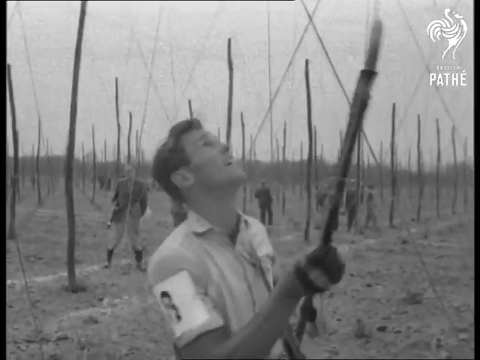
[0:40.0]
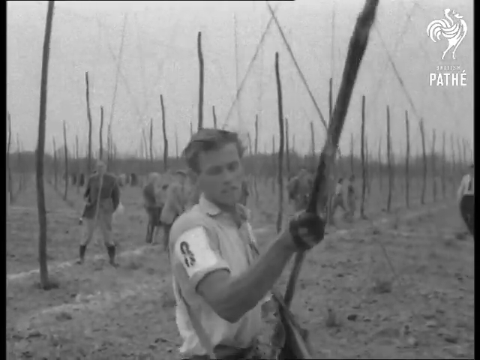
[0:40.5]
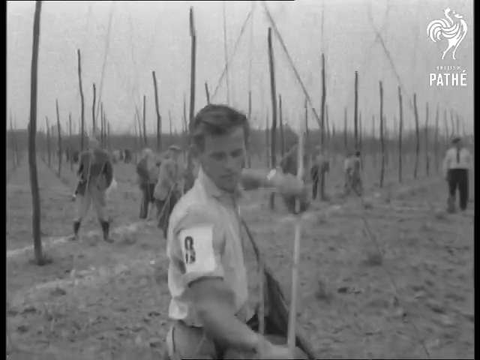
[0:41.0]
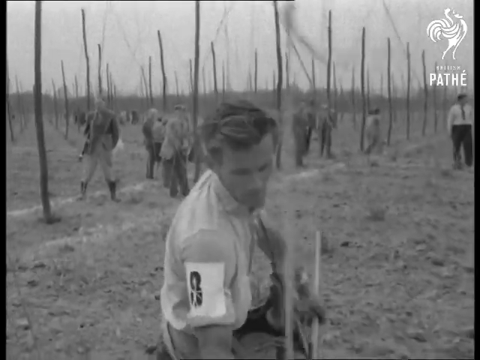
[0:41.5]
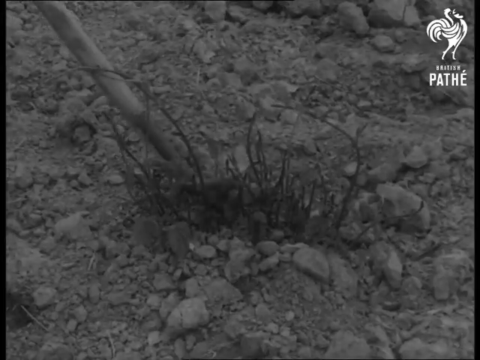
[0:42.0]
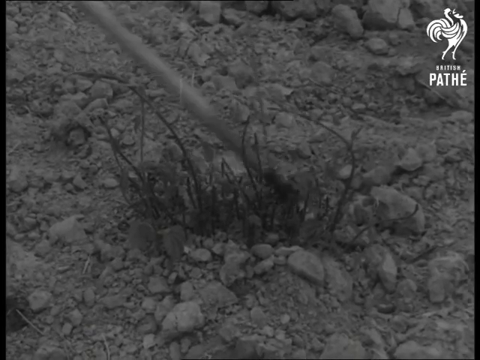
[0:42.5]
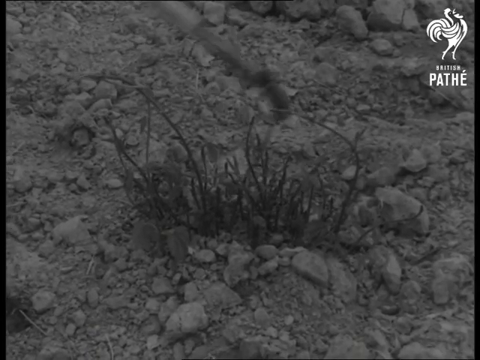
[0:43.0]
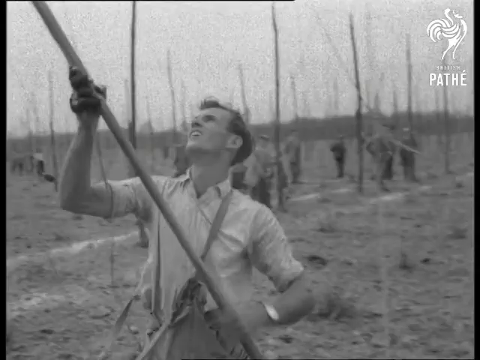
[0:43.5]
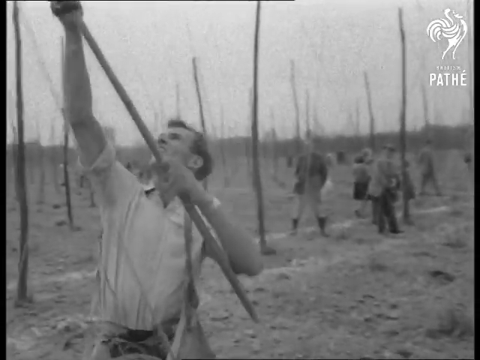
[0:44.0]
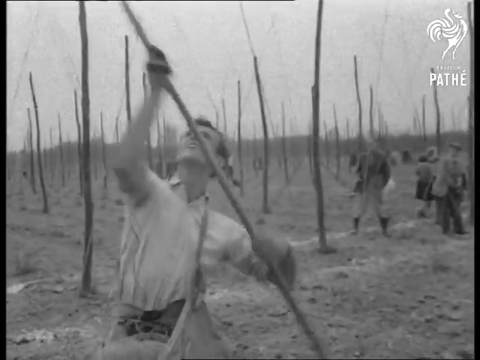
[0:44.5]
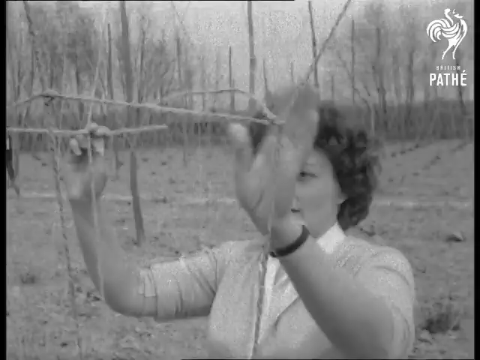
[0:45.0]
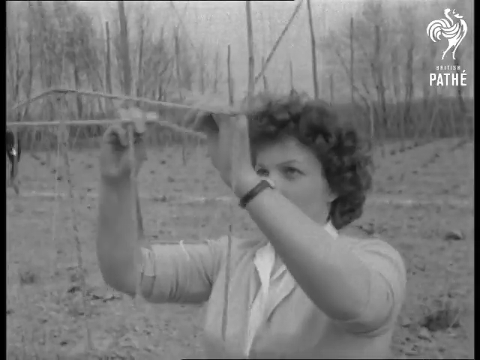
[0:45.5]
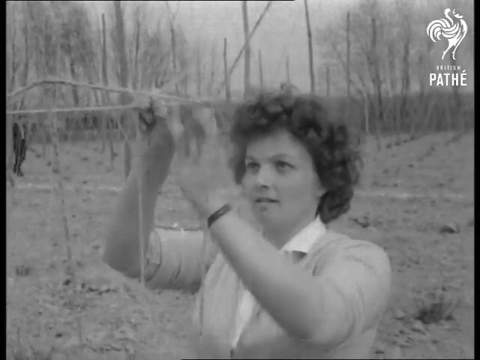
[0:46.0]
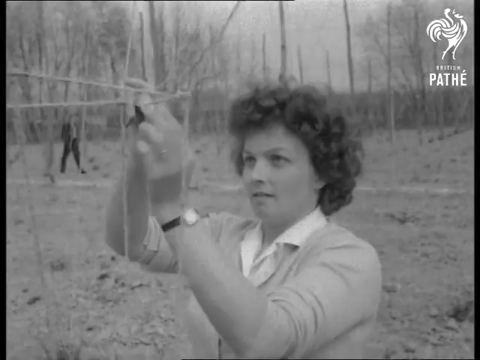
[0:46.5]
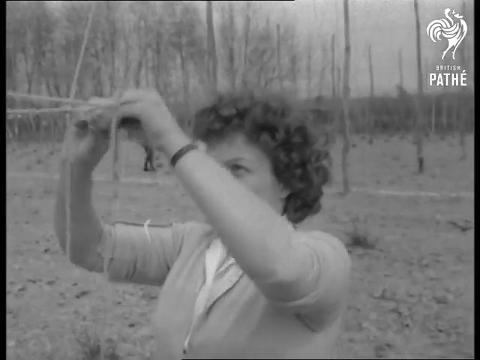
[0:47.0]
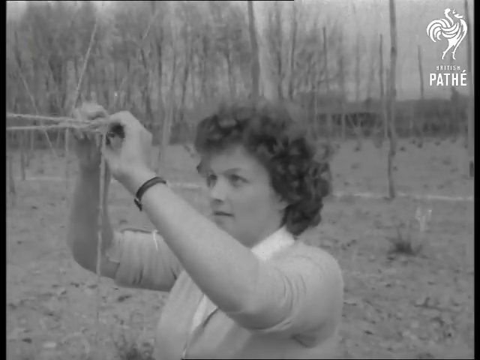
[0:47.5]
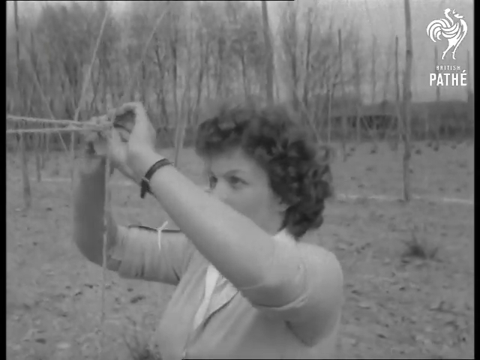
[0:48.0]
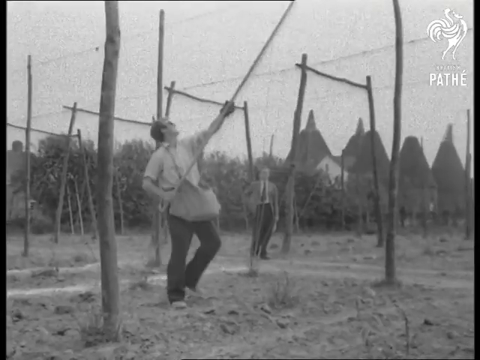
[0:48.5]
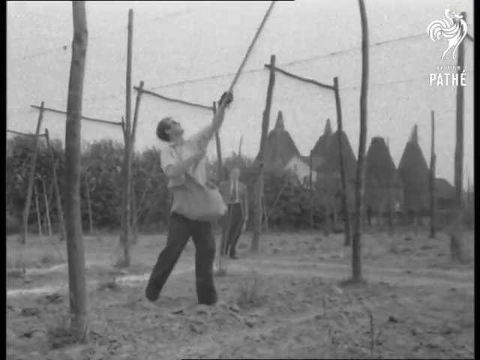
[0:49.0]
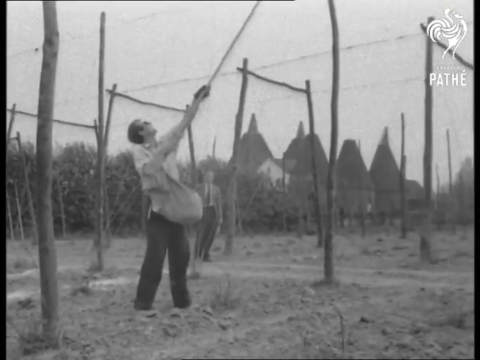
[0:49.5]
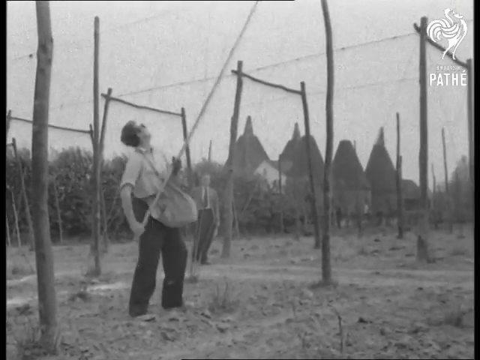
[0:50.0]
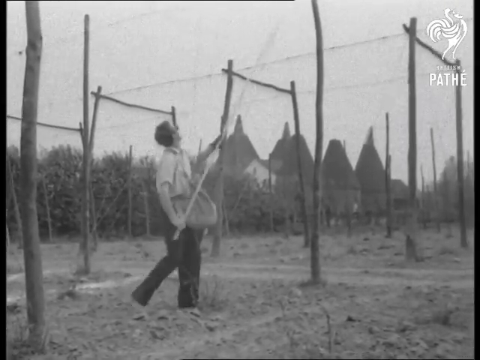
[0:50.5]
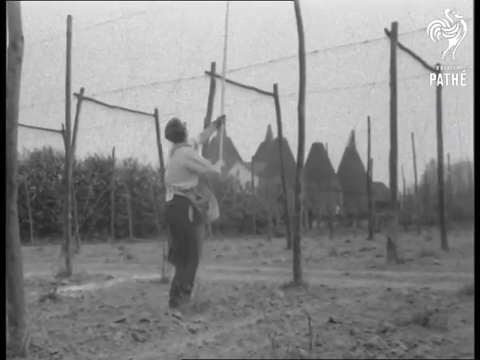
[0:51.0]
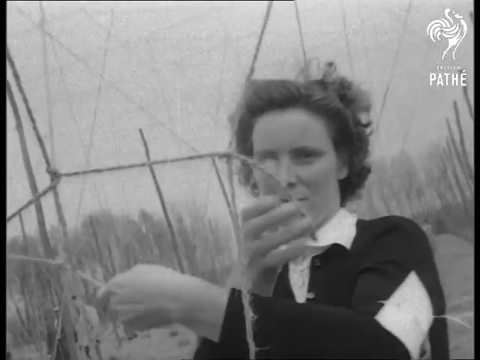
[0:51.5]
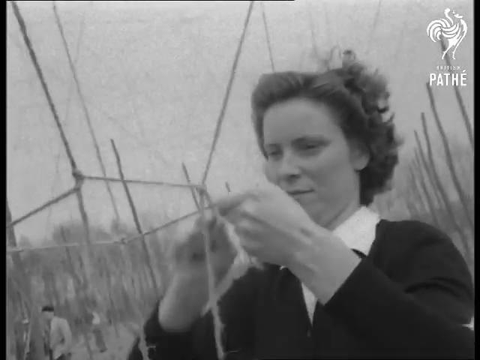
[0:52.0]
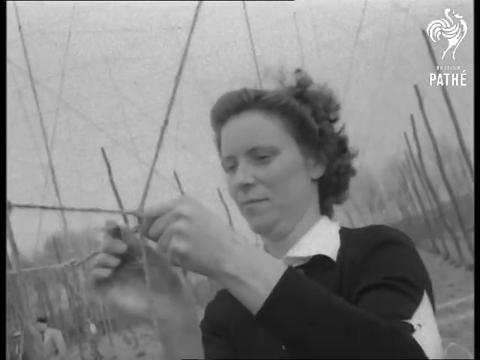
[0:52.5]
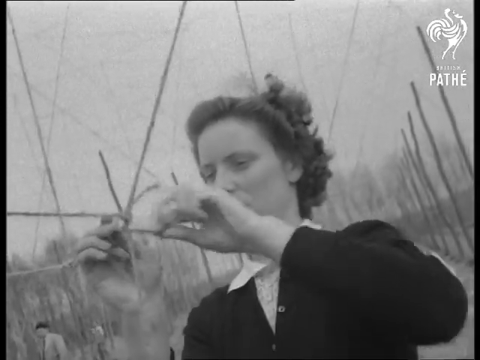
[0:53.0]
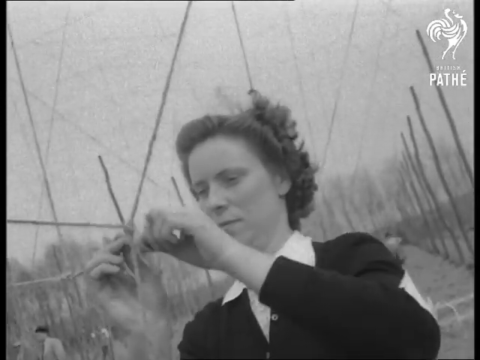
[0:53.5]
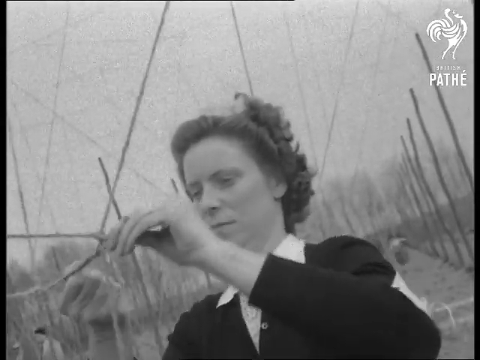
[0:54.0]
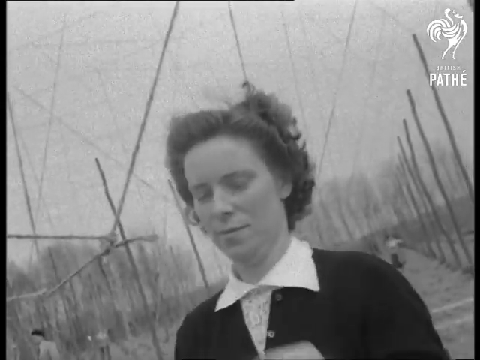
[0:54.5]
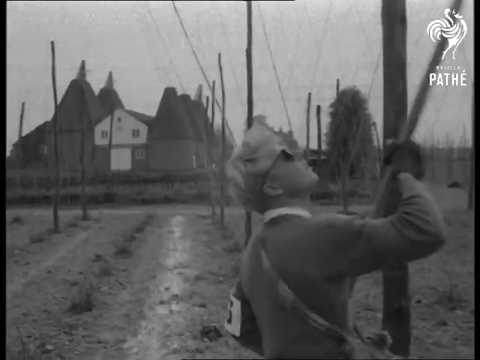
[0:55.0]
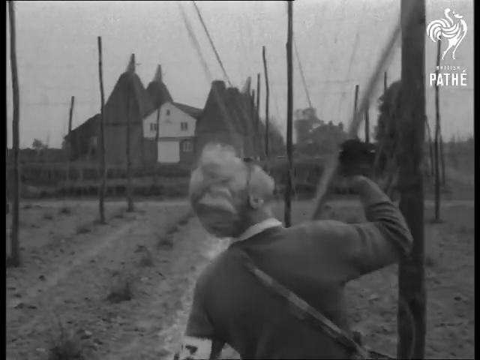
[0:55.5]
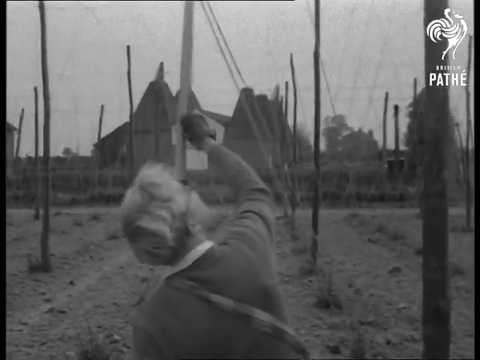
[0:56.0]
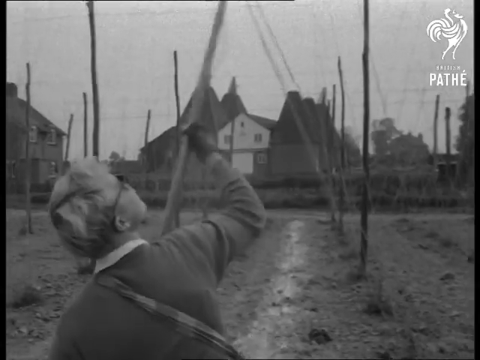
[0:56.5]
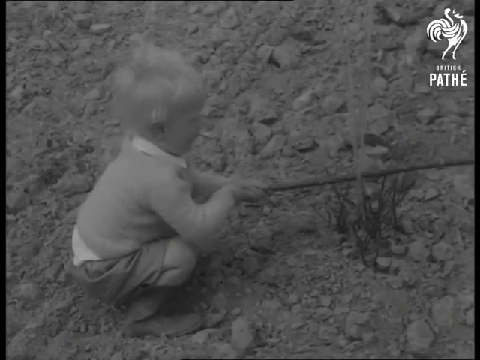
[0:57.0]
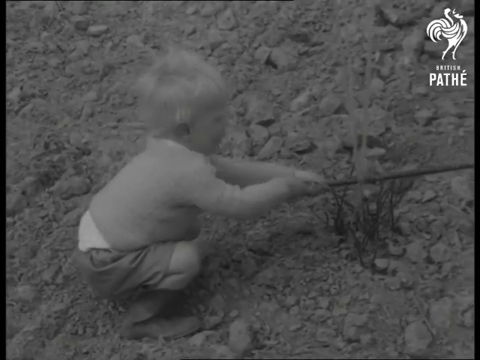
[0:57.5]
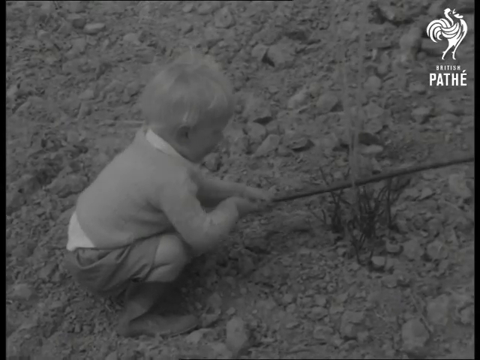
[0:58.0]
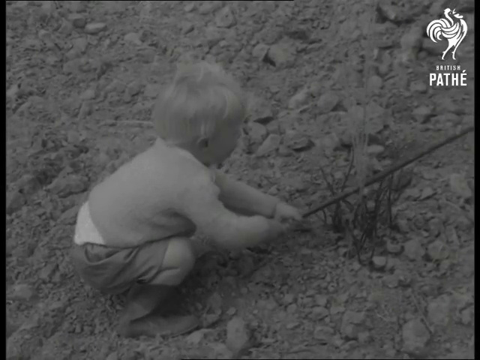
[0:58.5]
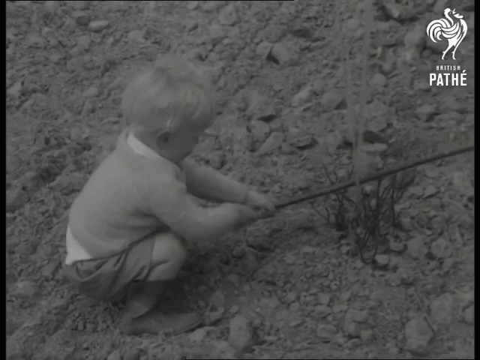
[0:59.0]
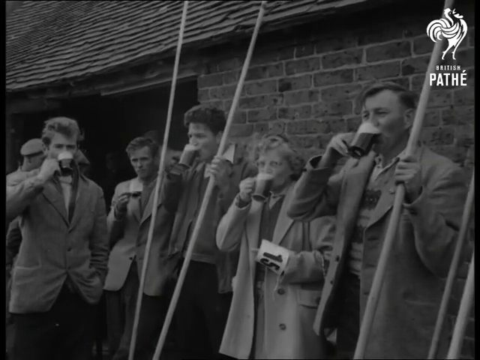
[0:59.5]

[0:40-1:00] A young man gathers up strings that are attached up high at the upper part of the poles, using his pole to bring them down and tie them together. The shots move from the young man to a woman; the women do not reach for the poles, and both women are just tying the strings. The young man has a number 8 on his left upper arm. There appears to be a child at the end. People stand around in the background, watching the participants.